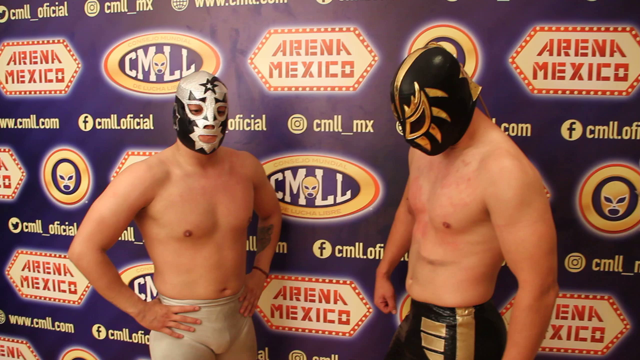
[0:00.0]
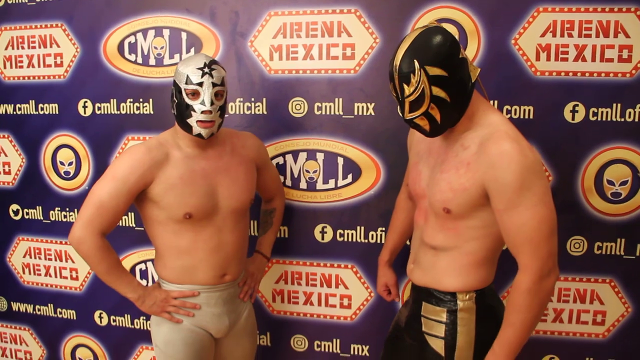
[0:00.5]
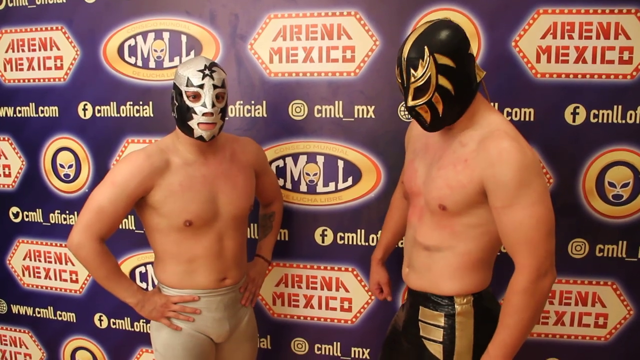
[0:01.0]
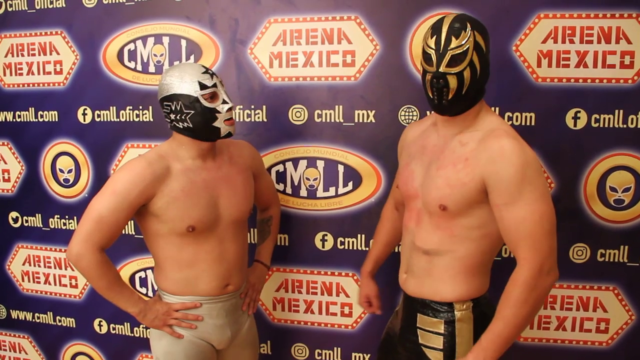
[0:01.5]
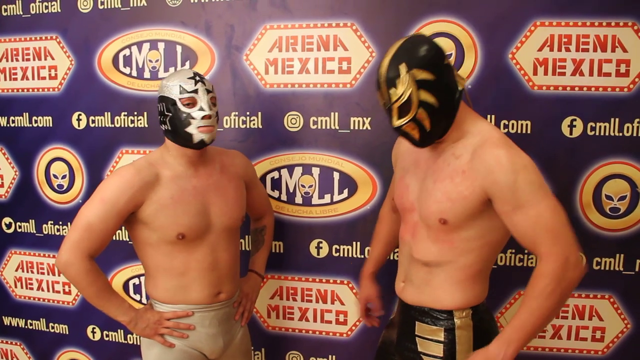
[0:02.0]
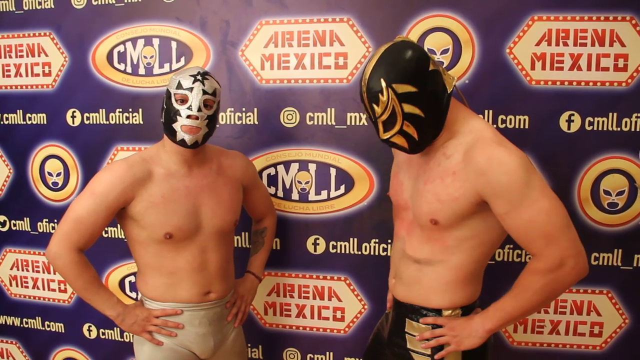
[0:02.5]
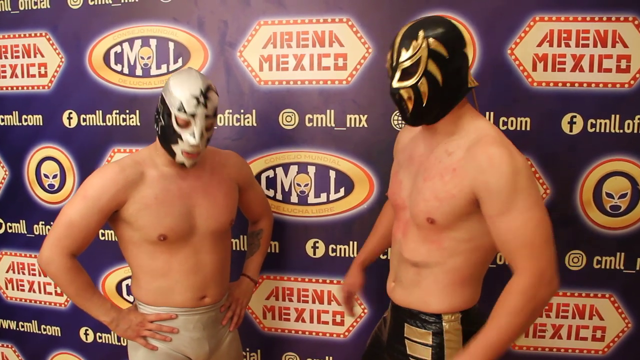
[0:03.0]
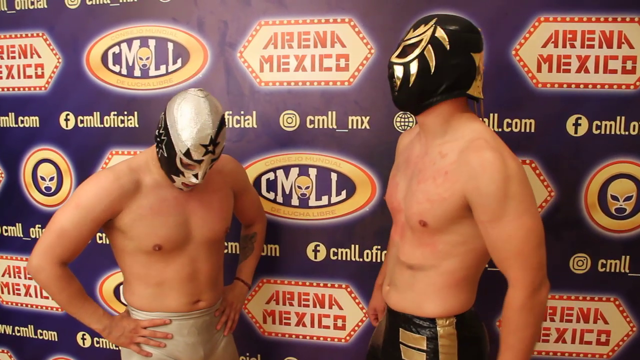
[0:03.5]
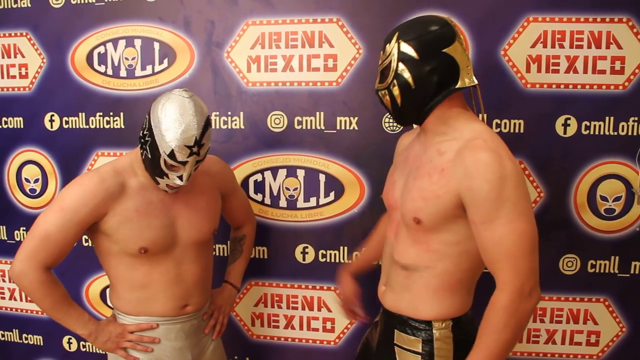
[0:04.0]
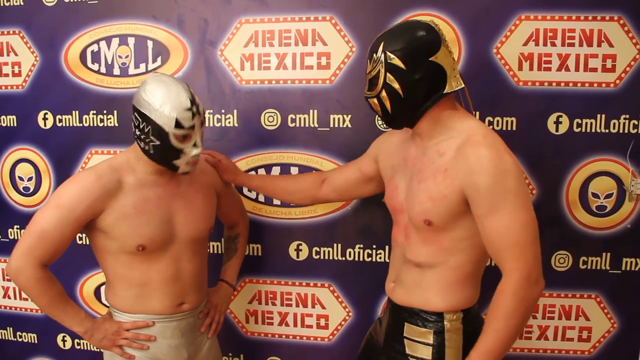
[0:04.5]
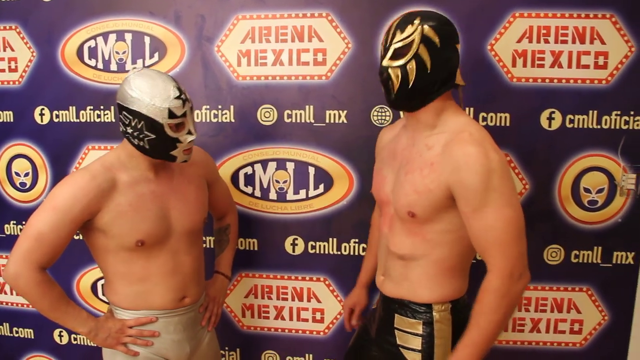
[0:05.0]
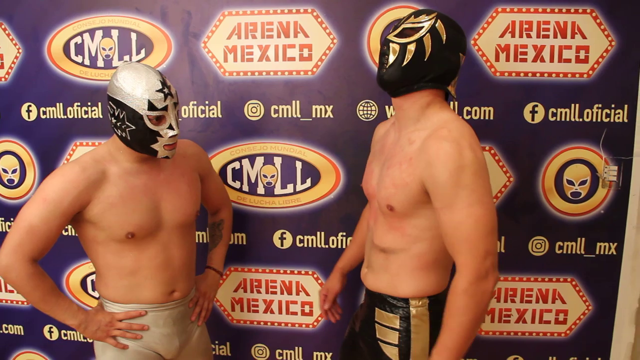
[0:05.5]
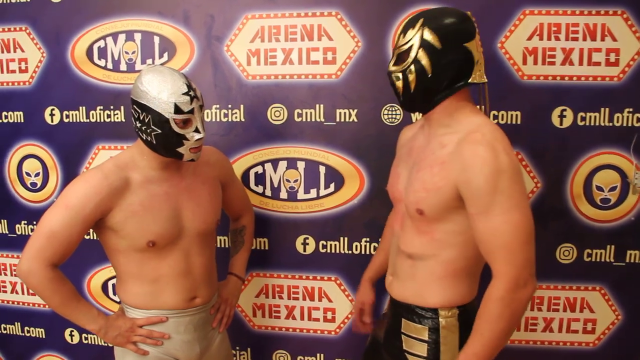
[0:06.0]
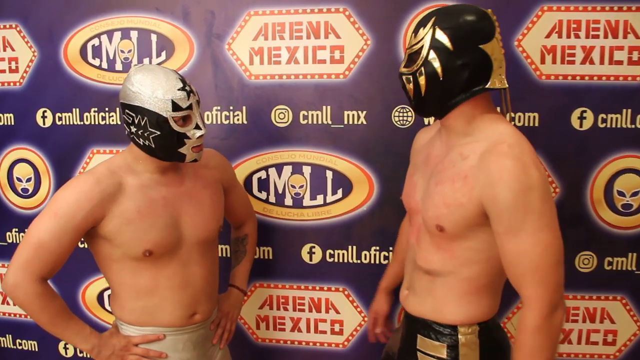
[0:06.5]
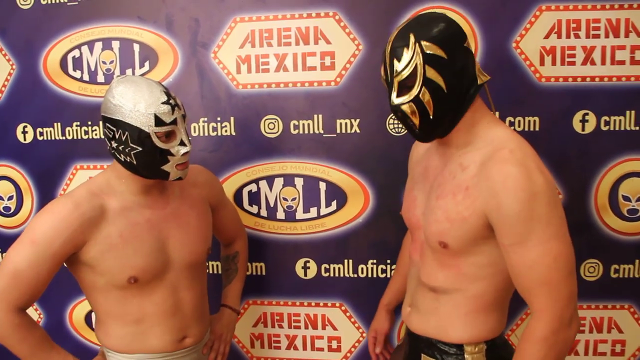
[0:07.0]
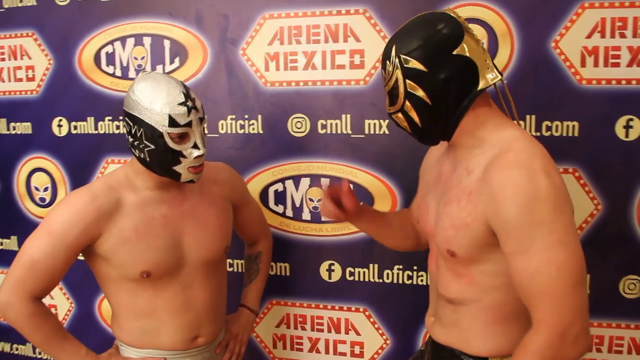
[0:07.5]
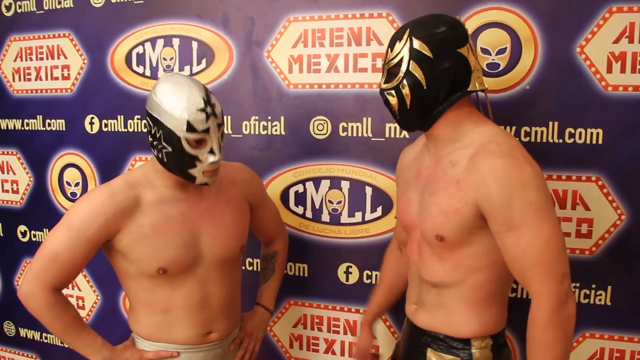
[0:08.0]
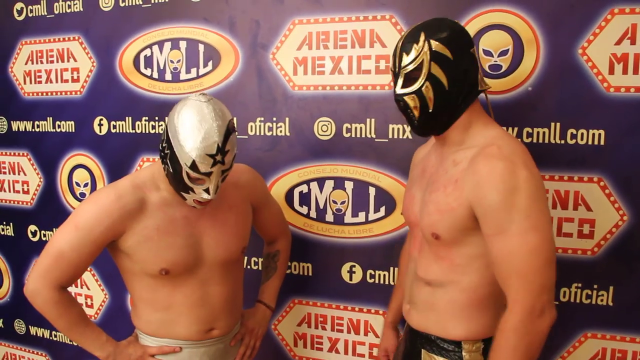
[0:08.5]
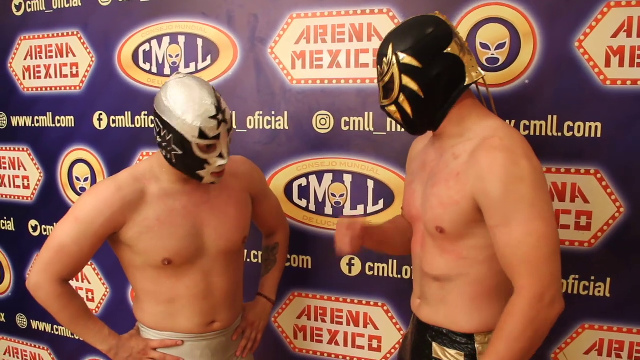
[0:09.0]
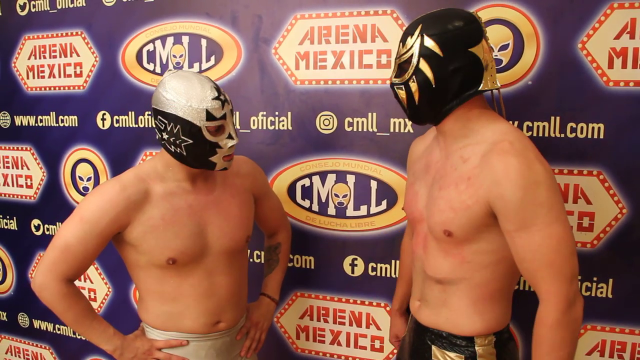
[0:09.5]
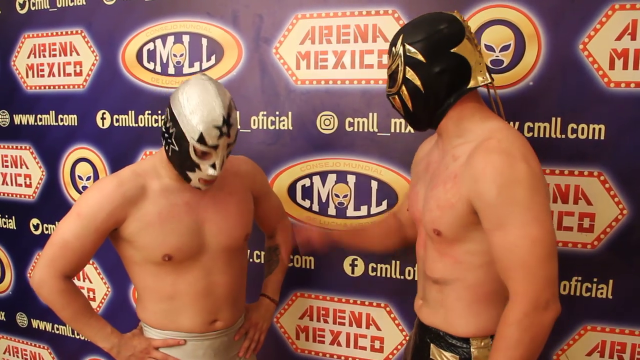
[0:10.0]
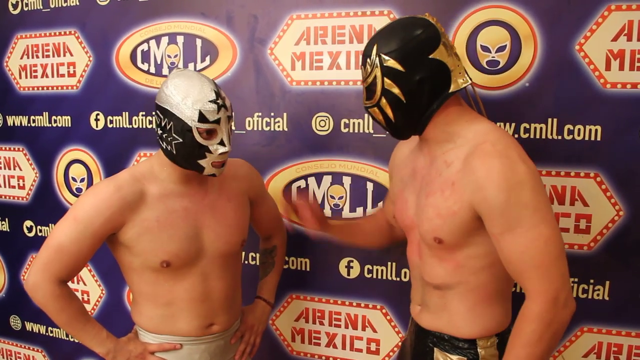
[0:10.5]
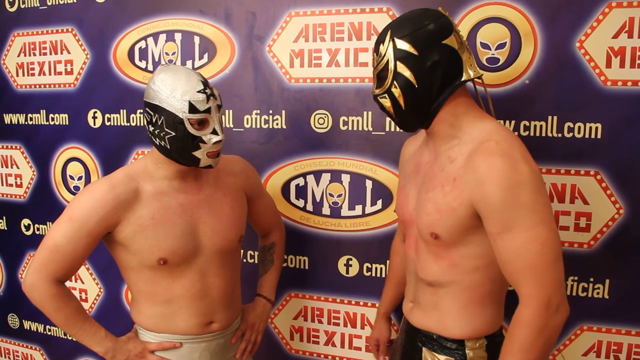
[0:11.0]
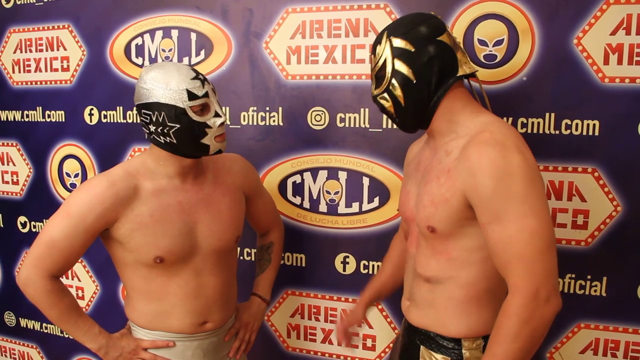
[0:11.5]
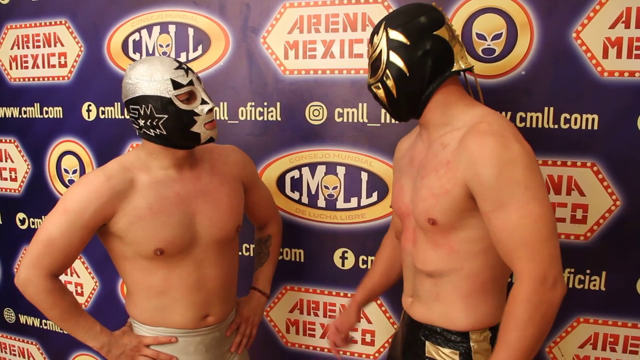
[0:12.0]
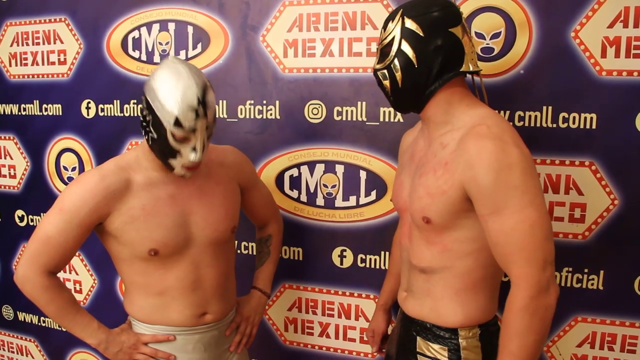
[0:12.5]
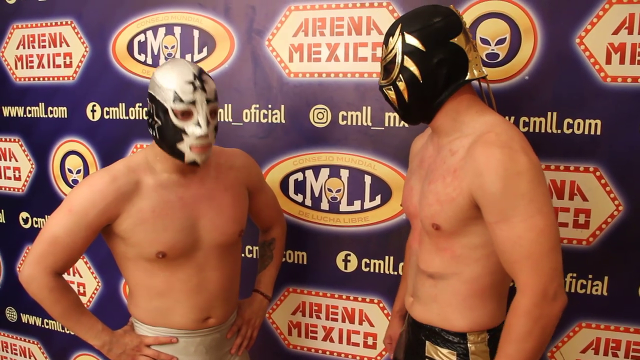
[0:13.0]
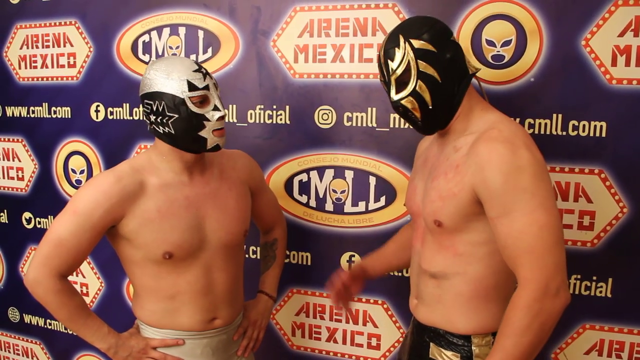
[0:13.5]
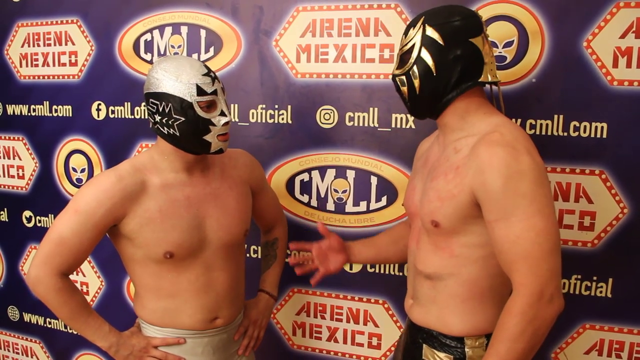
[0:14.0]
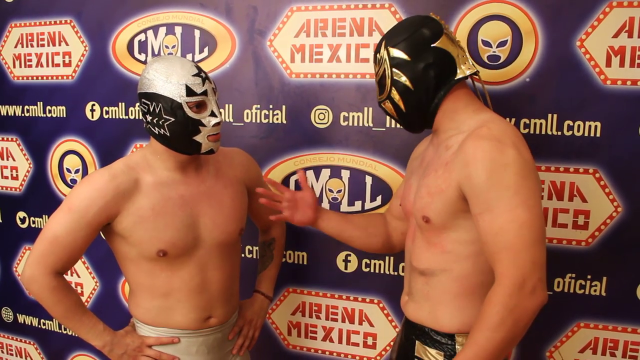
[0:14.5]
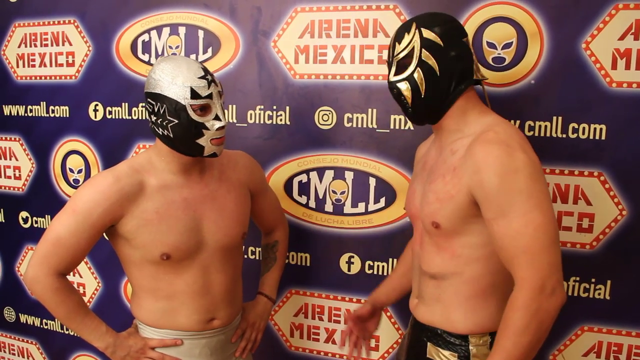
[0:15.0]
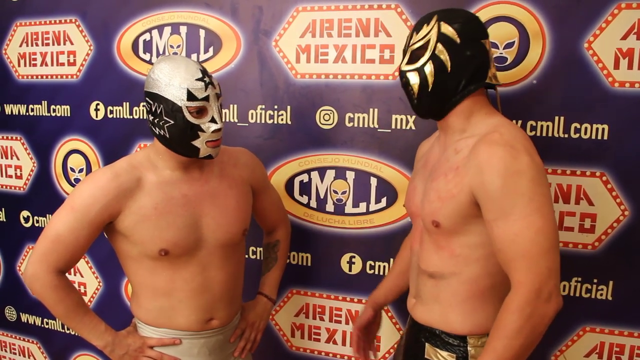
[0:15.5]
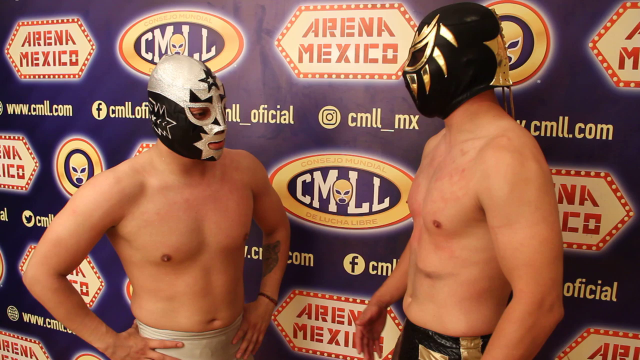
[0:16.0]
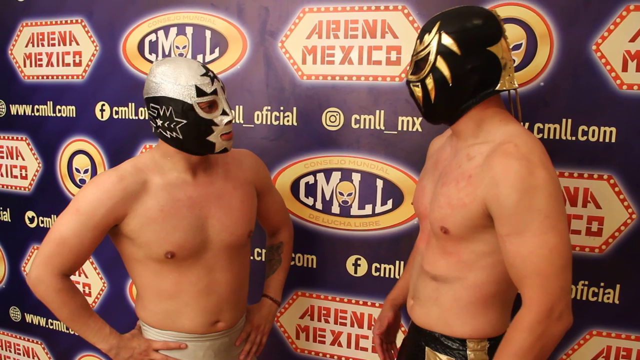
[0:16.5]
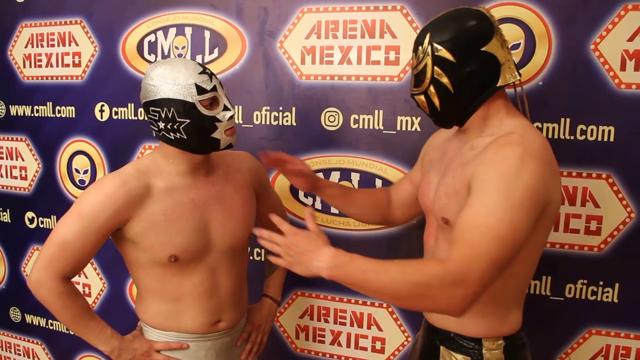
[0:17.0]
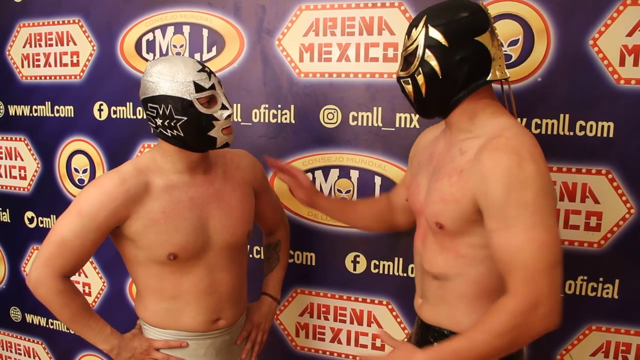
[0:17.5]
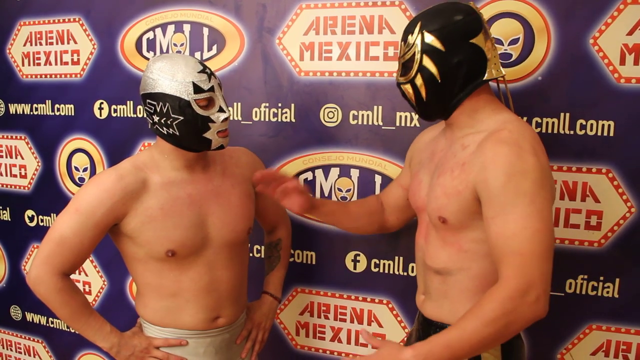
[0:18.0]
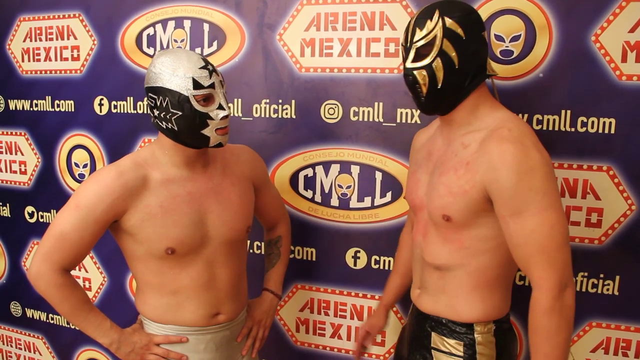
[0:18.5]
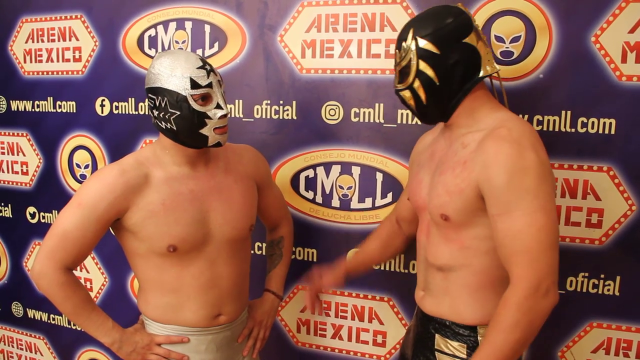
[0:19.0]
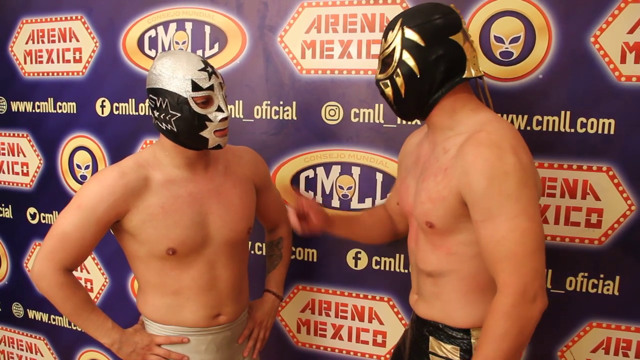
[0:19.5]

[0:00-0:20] Two shirtless men stand with their hands on their hips. One wears a black and gold mask, the other a white and black mask, and they wear matching trunks; their faces are concealed. The man in the black and gold mask keeps touching the man in the white and black mask on the arm as the two talk to each other. A big banner in the background reads "Arena Mexico" and gives social media handles: the Instagram handle "CMLLMX" and the Facebook handle "CML.official".